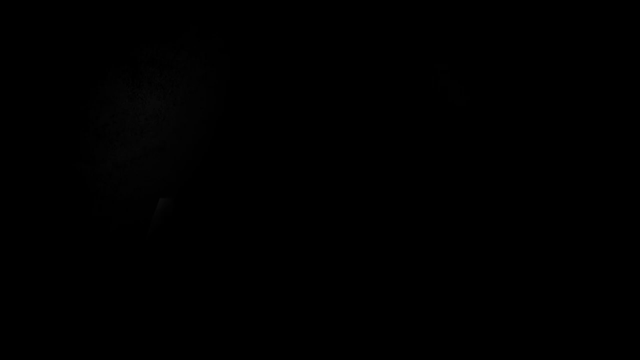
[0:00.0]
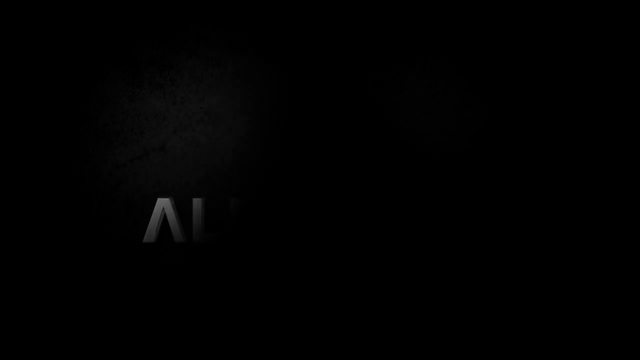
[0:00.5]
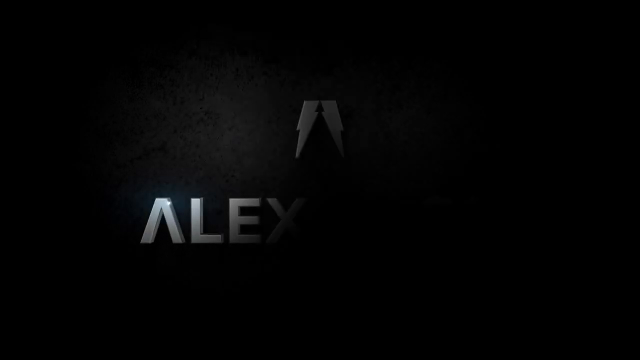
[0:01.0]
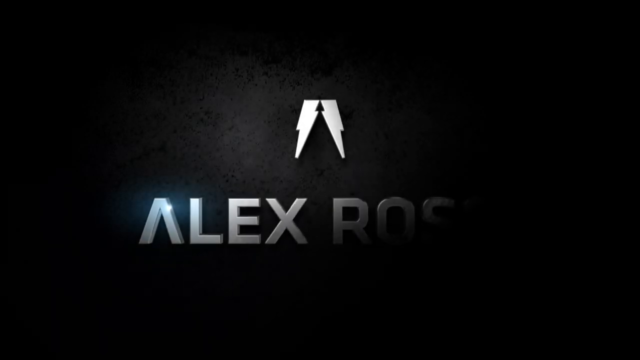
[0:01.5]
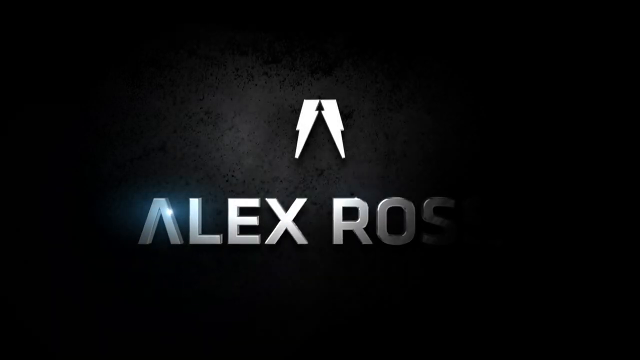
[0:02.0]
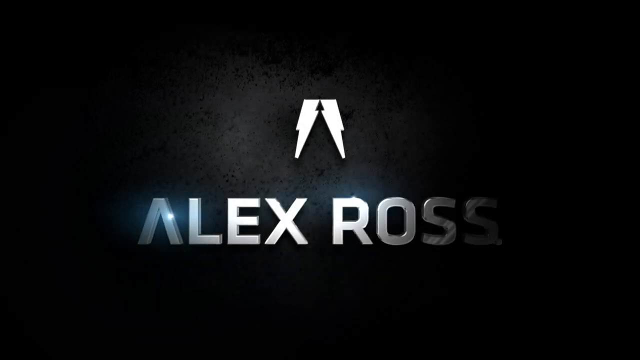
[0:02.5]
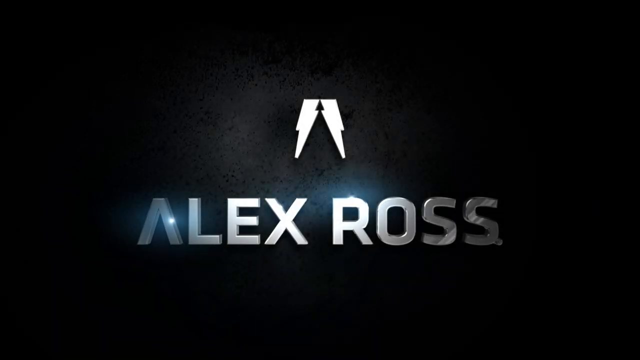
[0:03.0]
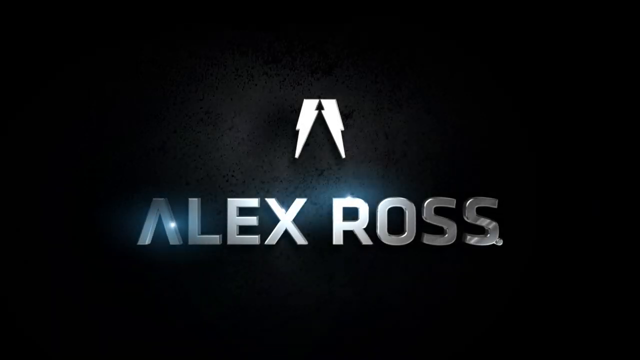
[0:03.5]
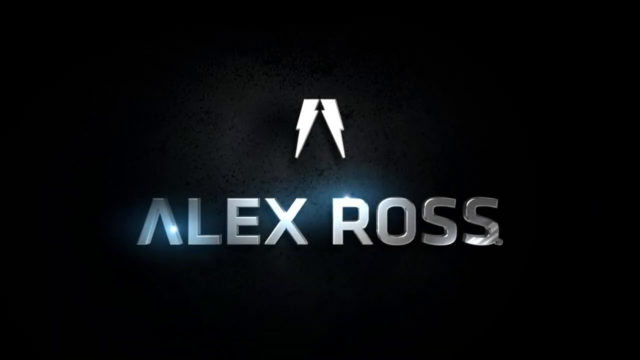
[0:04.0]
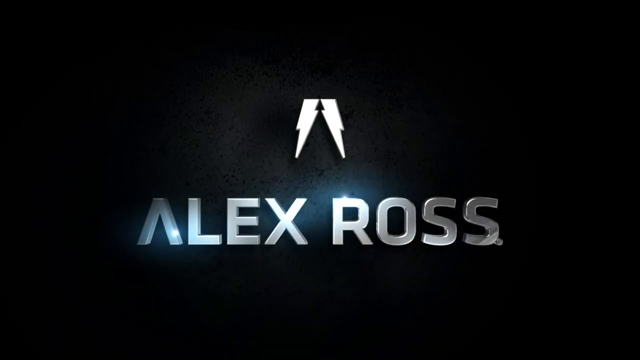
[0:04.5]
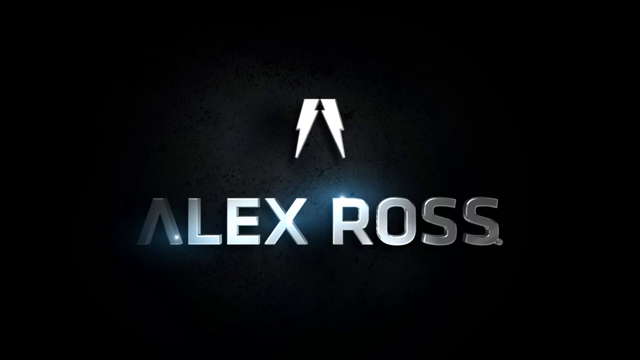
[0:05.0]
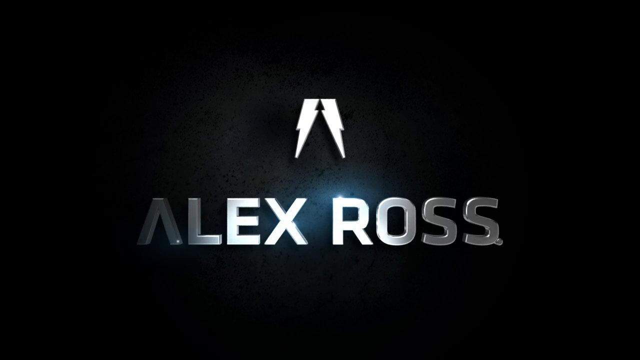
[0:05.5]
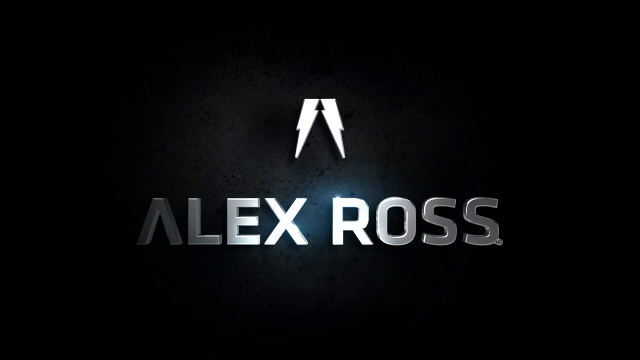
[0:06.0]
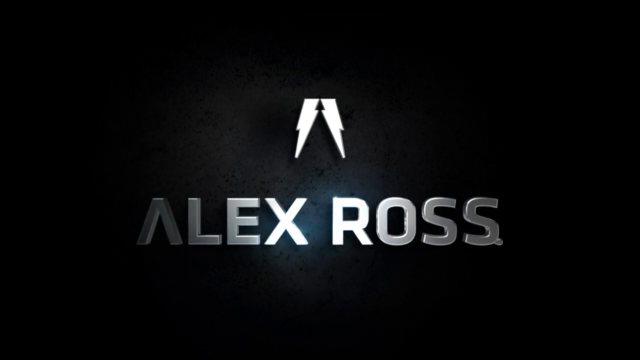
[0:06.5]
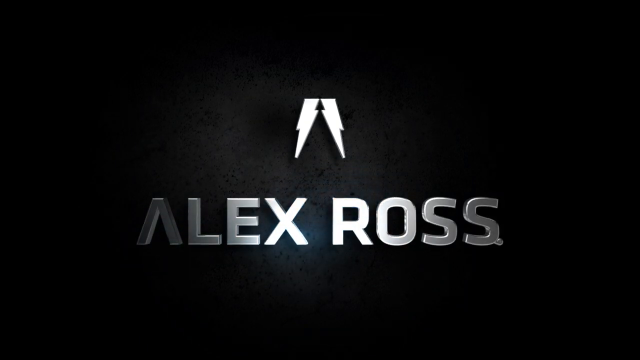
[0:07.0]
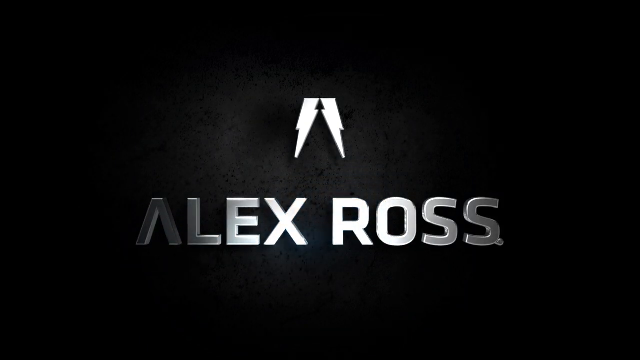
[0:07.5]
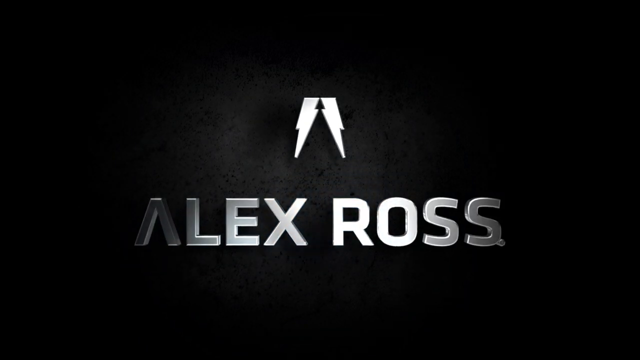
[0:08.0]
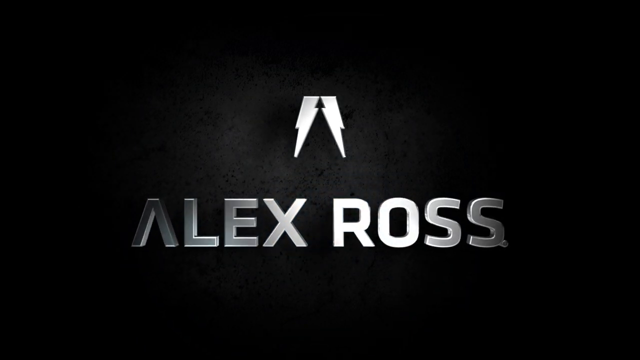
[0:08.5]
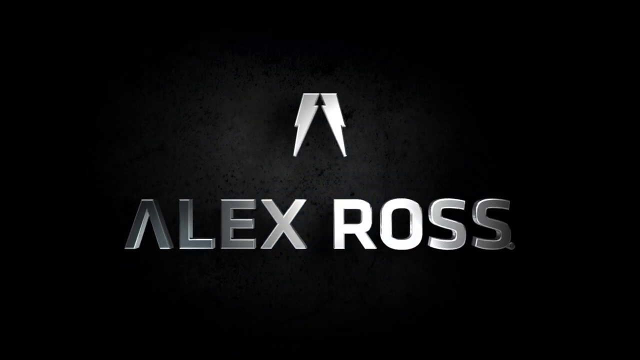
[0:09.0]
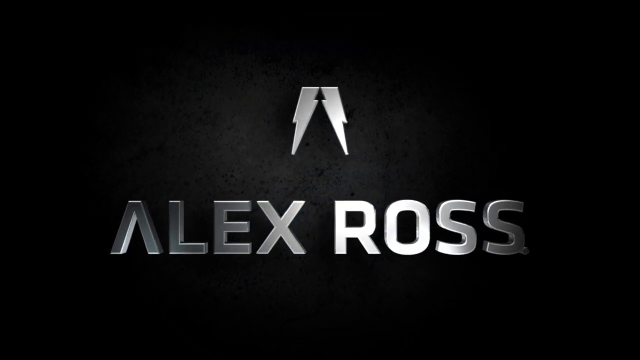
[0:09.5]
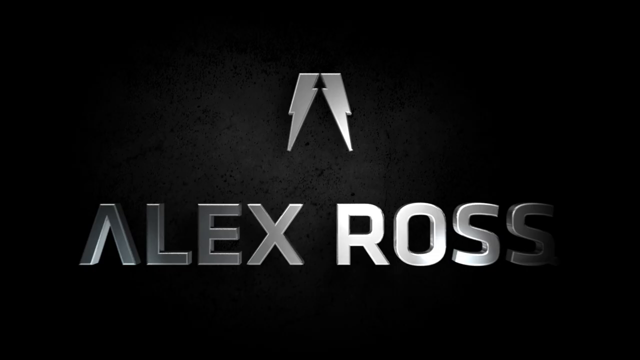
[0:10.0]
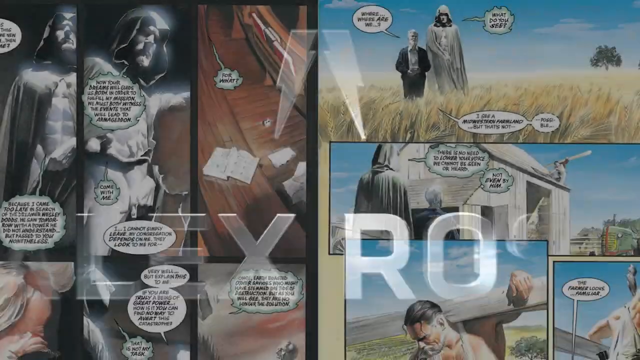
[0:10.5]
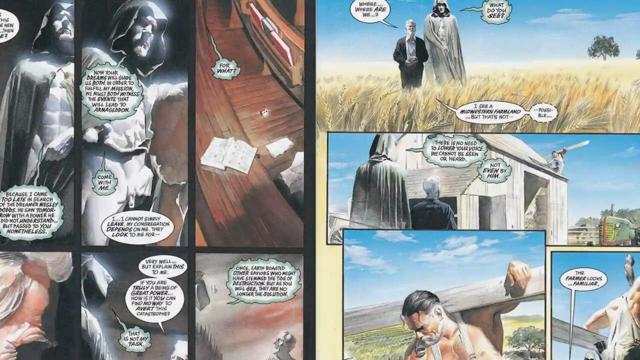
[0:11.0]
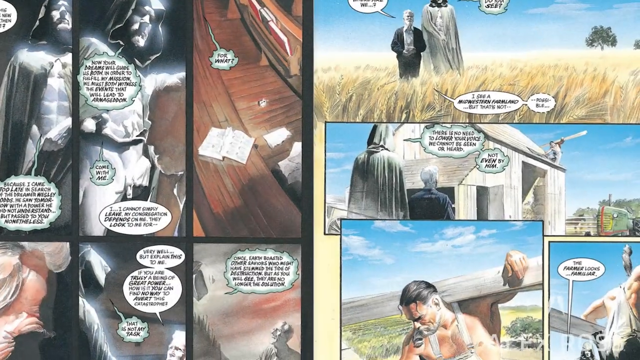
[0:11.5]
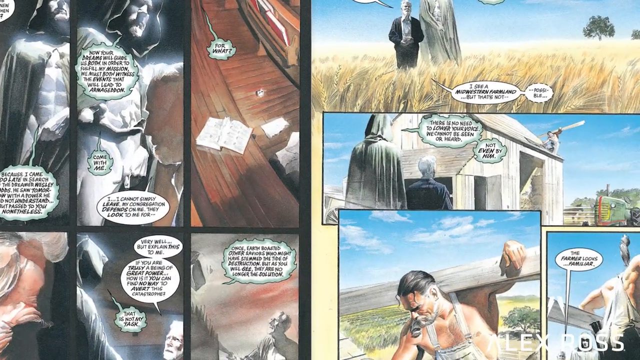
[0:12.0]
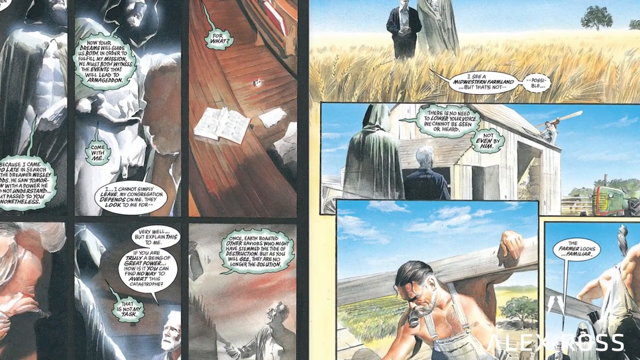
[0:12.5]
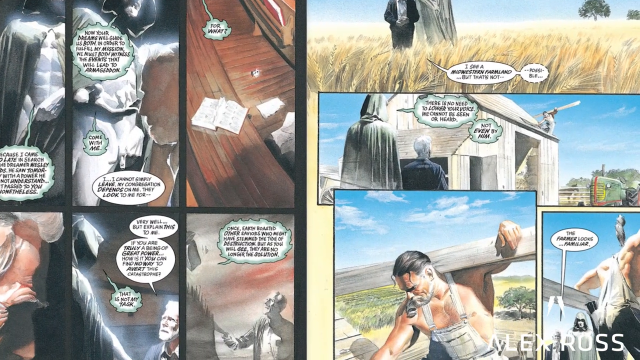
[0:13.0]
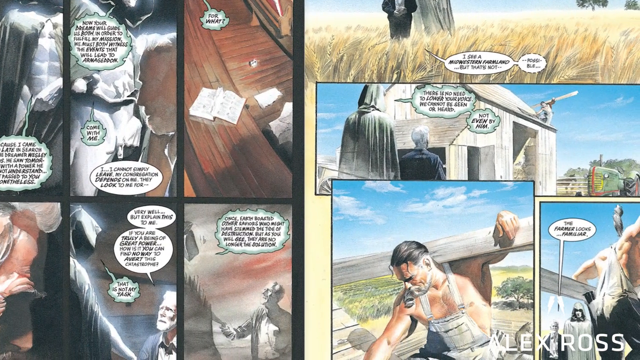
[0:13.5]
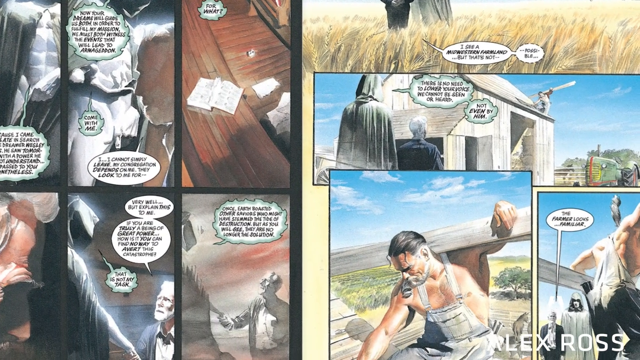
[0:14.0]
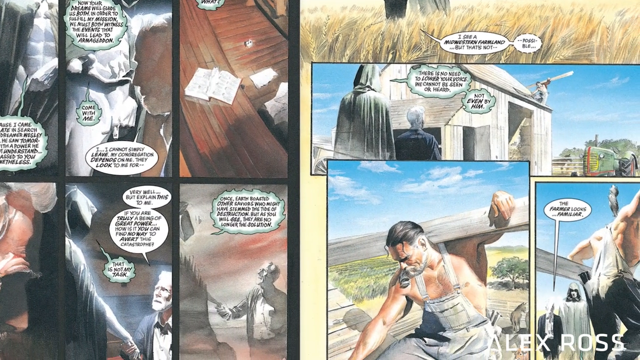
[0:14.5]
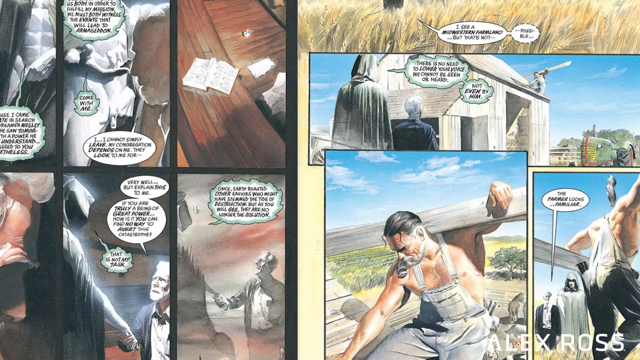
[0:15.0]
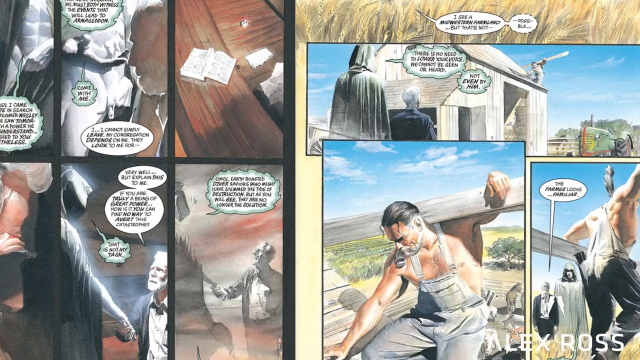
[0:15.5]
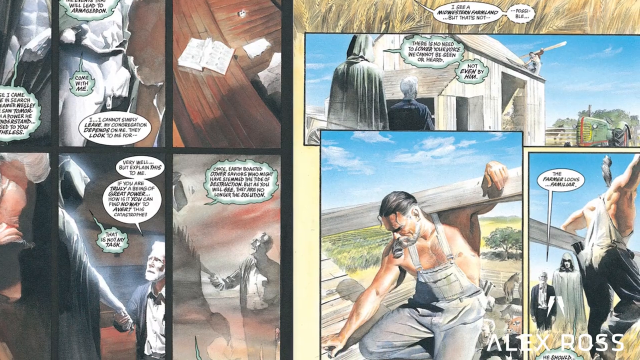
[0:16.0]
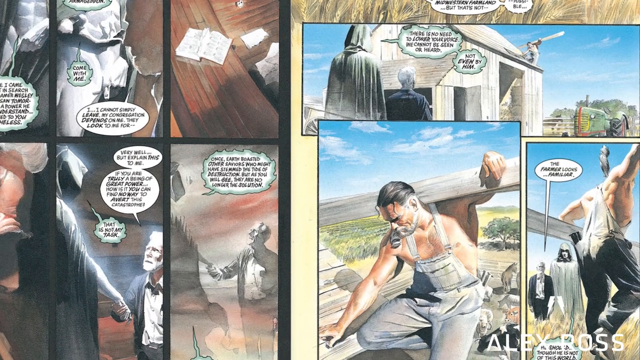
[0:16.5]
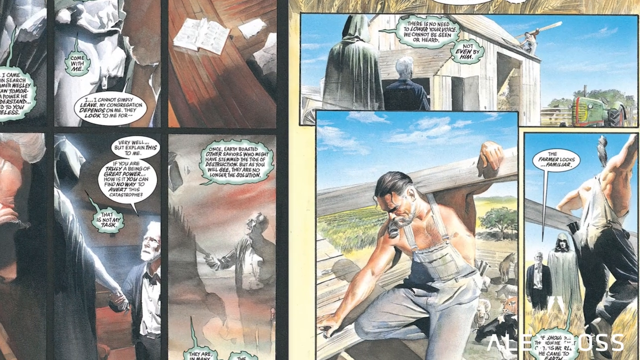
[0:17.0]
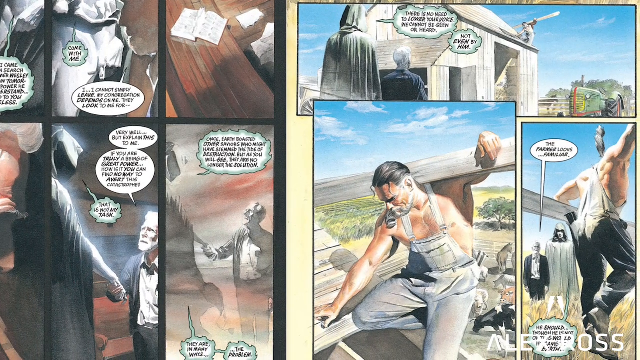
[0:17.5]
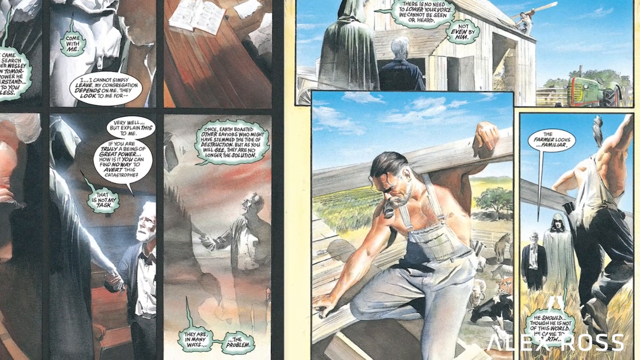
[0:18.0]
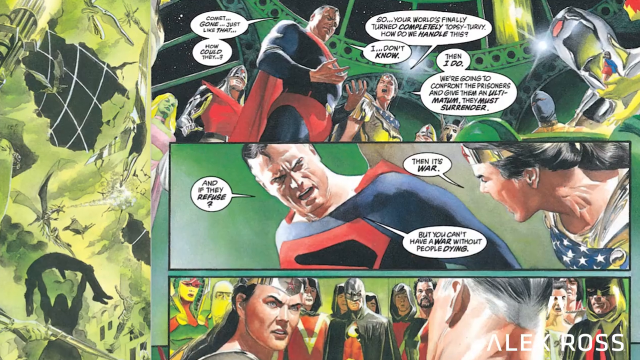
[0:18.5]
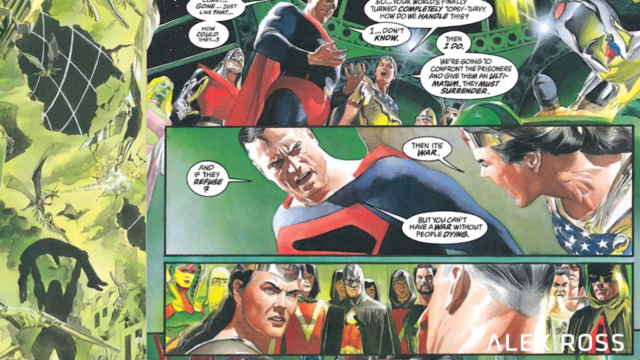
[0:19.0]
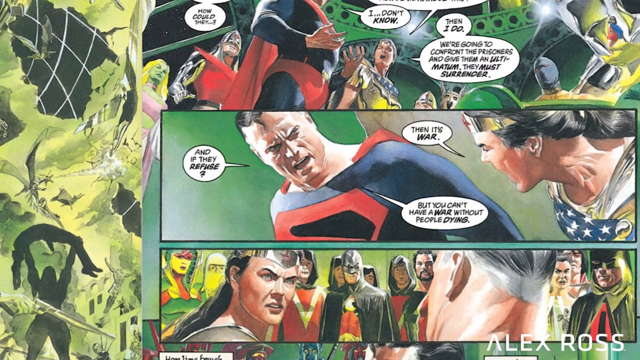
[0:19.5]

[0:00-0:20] The words "Alex Ross" appear on the screen one letter at a time from the left-hand side, in block writing with a slight reflection on it. Above them is an icon that looks a little like a tall Christmas tree in the centre, white around the outside. A reflection shimmers across the words "Alex Ross", and then the text moves towards the camera, gets bigger and disappears. A cartoon strip is then visible behind. It shows a hooded figure, a field of corn on the right-hand side, and another figure walking with a hooded figure. There are thought bubbles and speech bubbles with text inside them. There is a drawing of a man with dark floppy hair wearing dungarees, and Superman and a woman are also on the screen. These cartoons are arranged in small squares across the page.